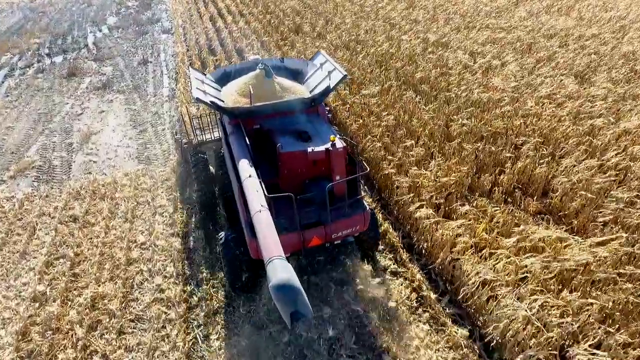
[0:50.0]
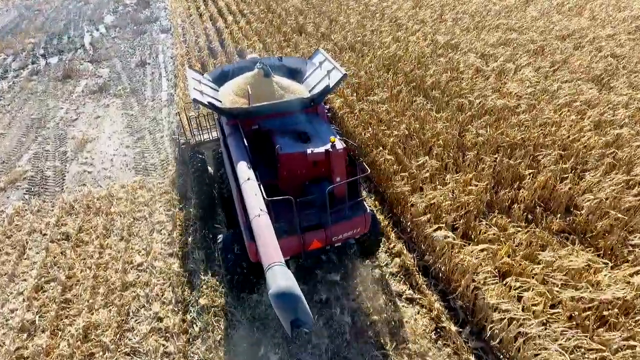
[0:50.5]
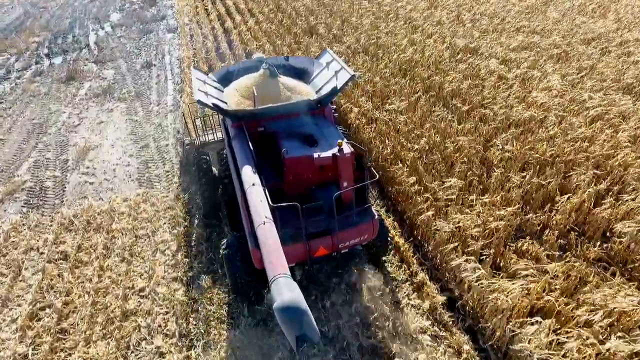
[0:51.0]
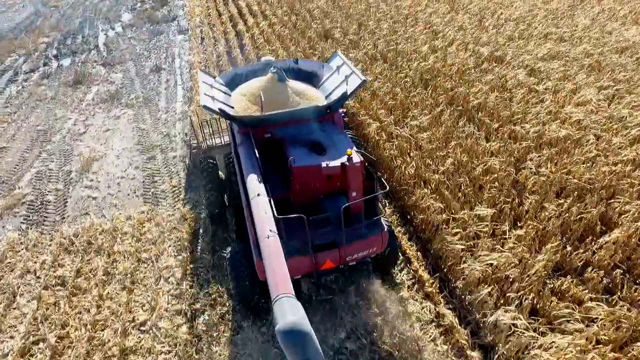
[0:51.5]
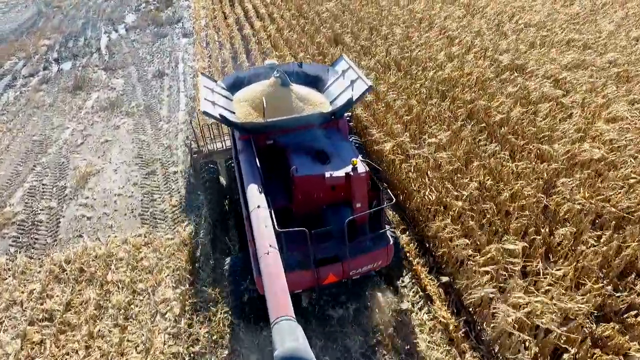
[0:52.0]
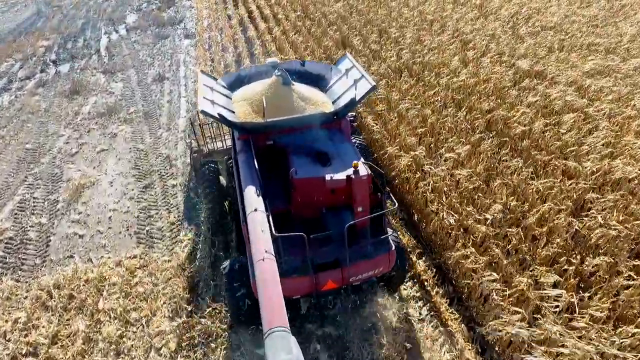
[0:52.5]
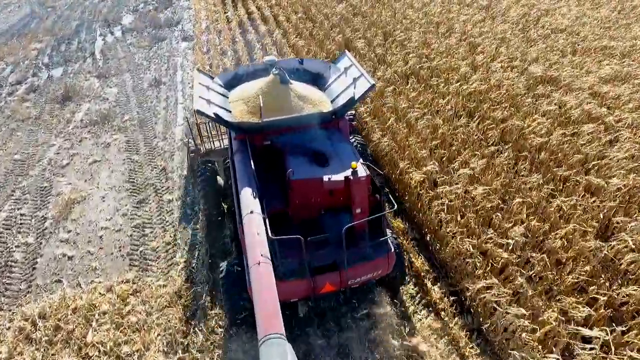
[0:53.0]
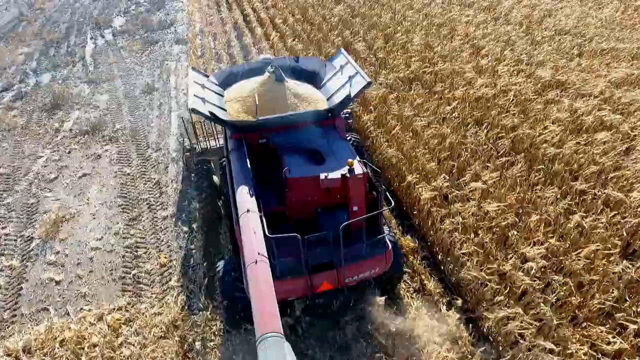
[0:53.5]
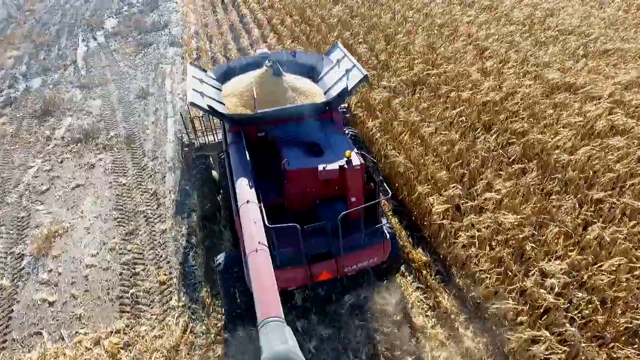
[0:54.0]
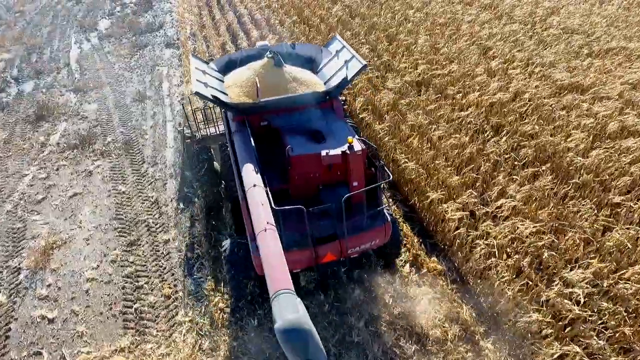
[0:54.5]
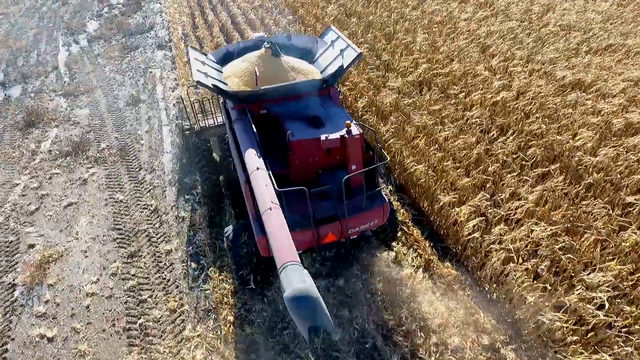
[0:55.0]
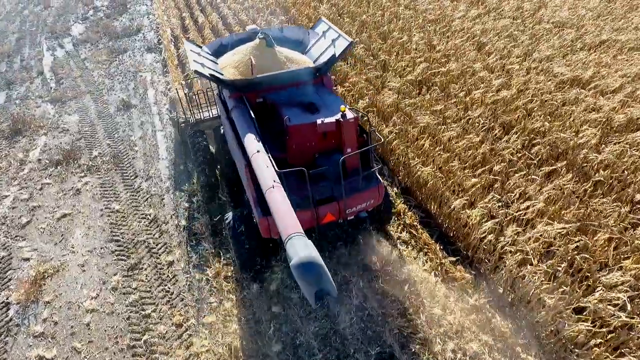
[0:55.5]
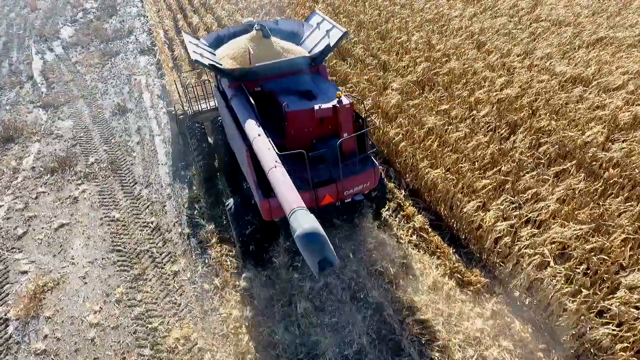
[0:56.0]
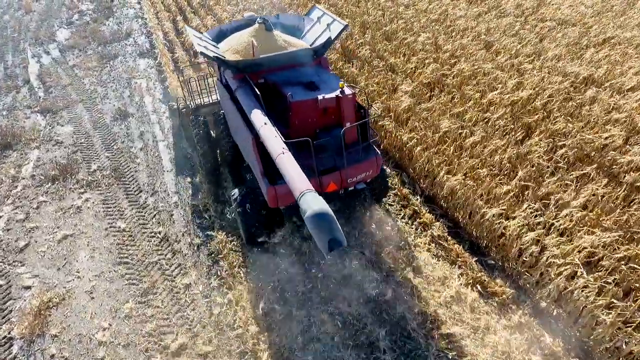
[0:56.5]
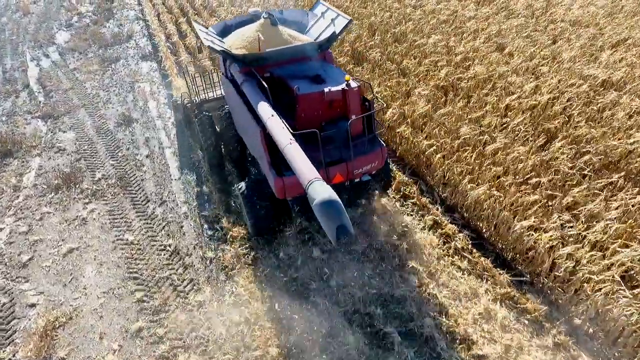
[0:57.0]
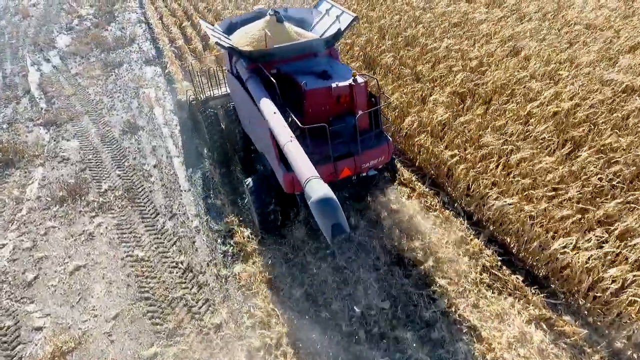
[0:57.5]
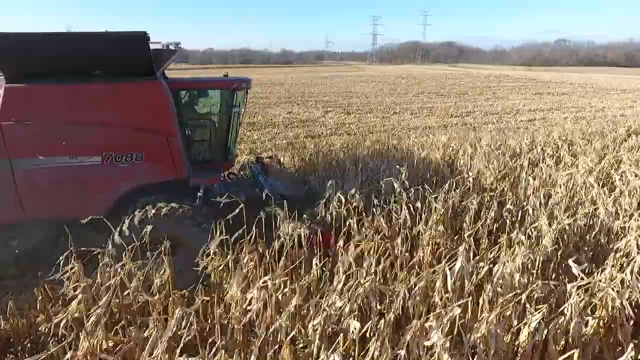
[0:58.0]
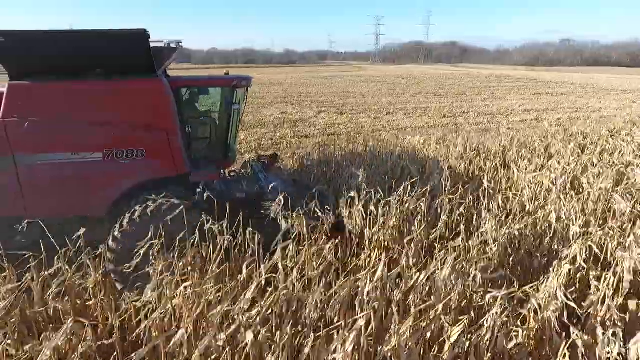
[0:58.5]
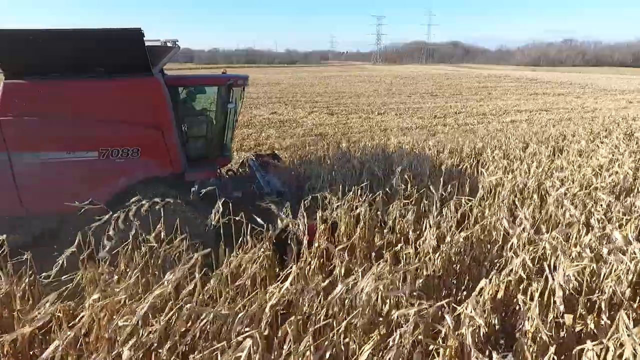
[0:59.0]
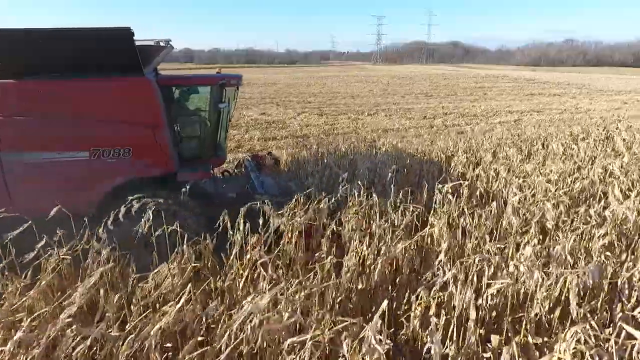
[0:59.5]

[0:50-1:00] A bird's-eye view looks roughly toward the back of the tractor as it drives forward off the screen. On the left, the field has been completely tilled, while on the right the grain is still standing. The inside of the tractor is full of something that looks somewhat like cornmeal, and a tube out the back is blowing it out. A quick side view of the same tractor follows; someone appears to be inside driving, and the tractor, seen apparently from its right side, moves from left to right across the screen. In the background are three or four electrical towers and a large expanse of field beyond the tractor.